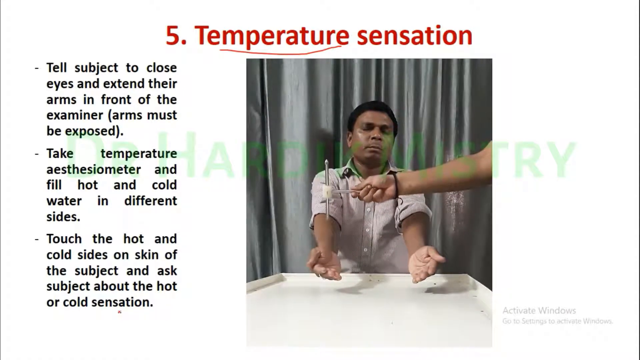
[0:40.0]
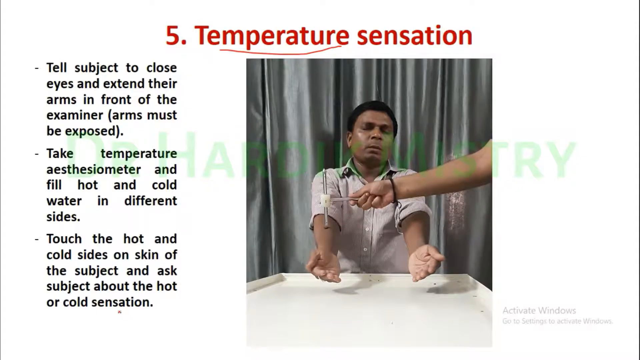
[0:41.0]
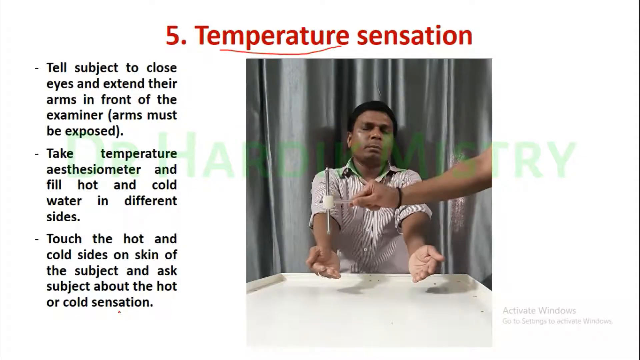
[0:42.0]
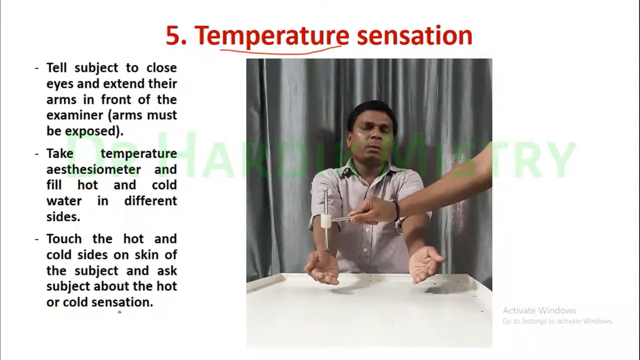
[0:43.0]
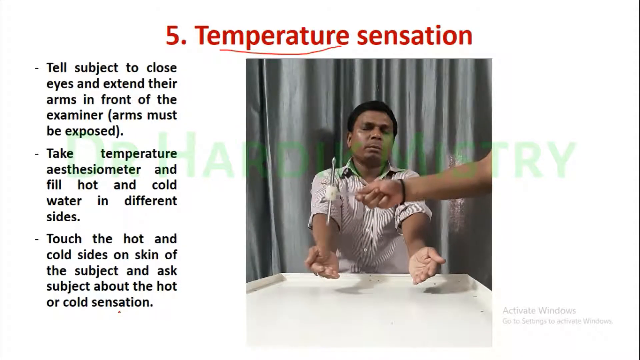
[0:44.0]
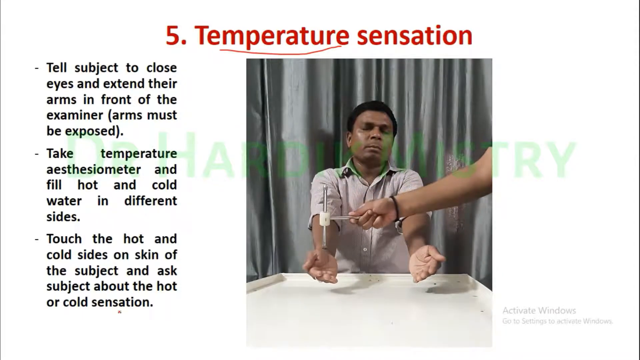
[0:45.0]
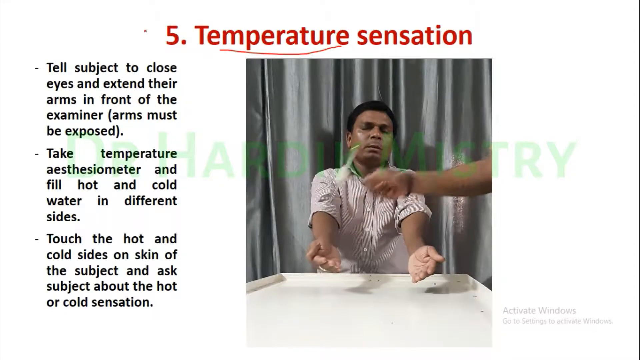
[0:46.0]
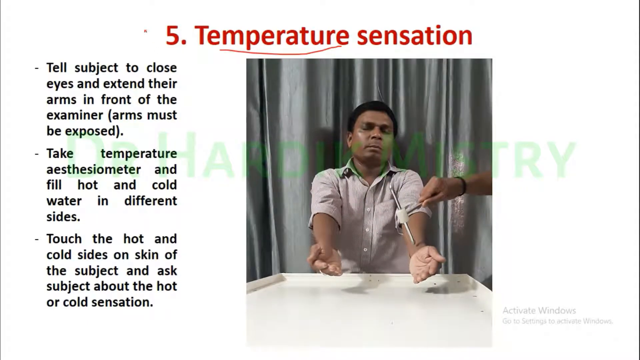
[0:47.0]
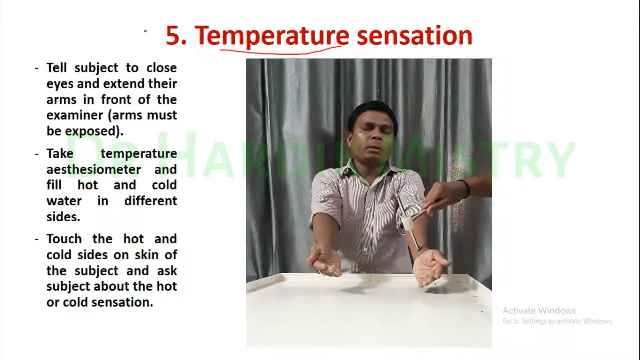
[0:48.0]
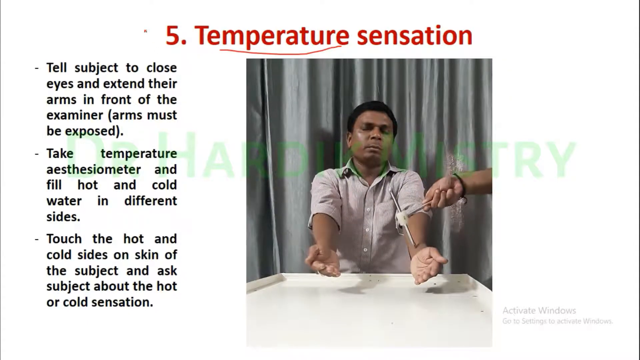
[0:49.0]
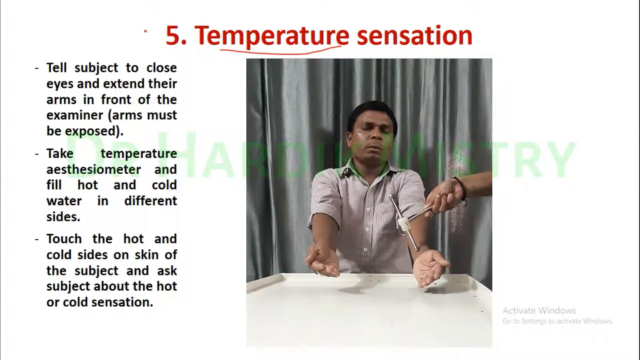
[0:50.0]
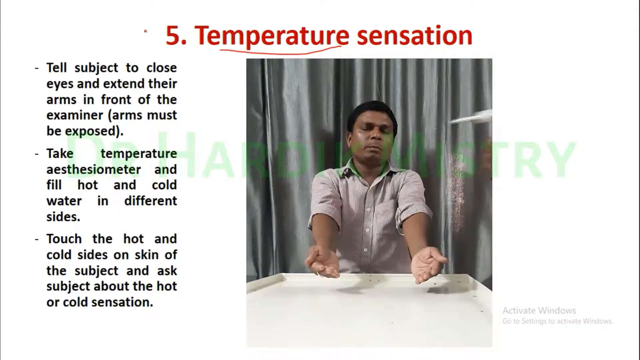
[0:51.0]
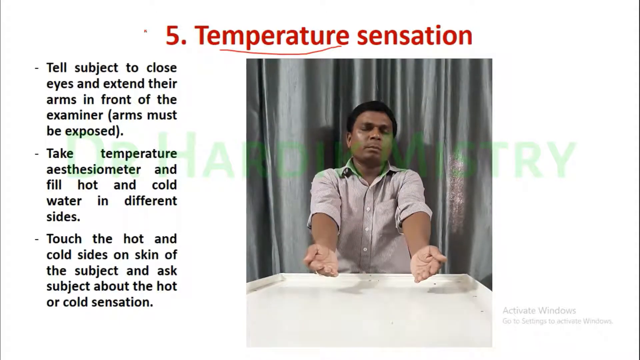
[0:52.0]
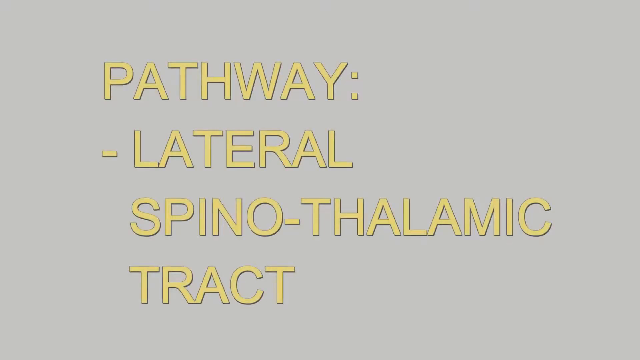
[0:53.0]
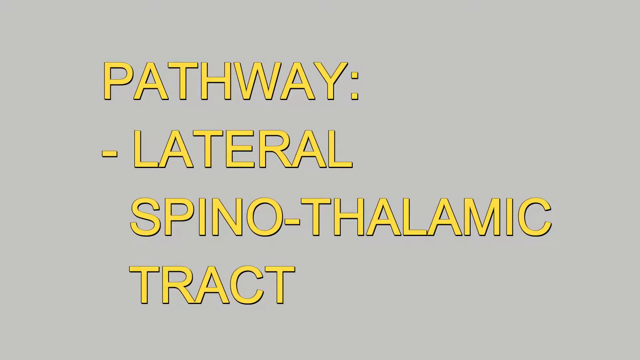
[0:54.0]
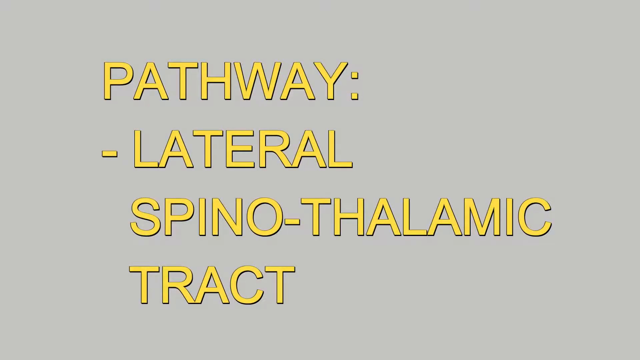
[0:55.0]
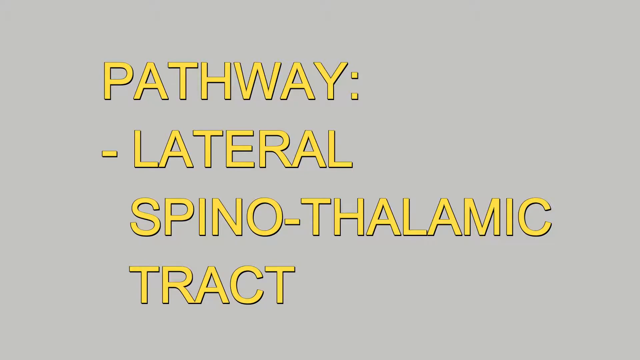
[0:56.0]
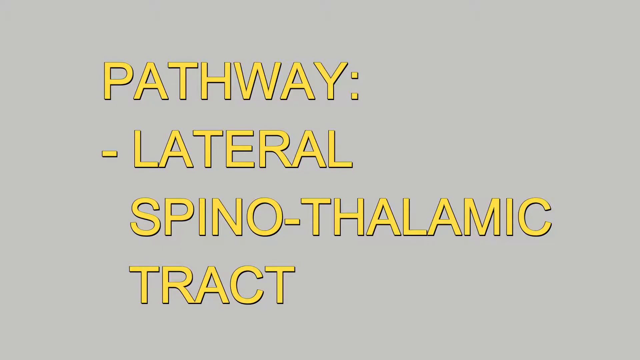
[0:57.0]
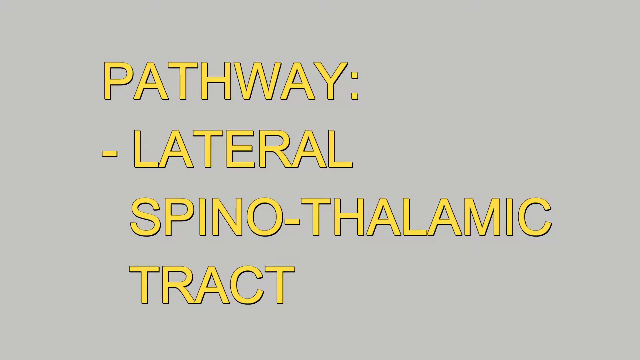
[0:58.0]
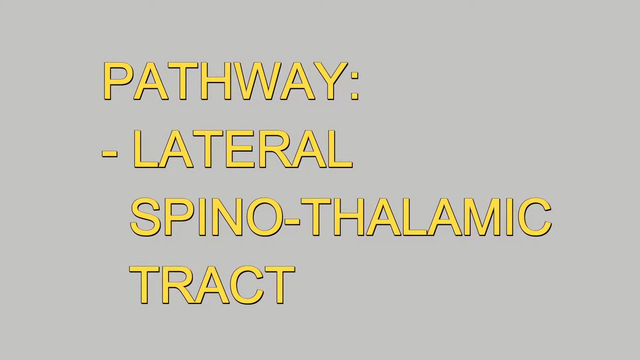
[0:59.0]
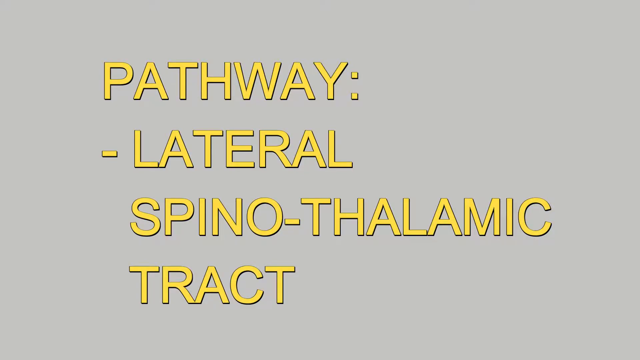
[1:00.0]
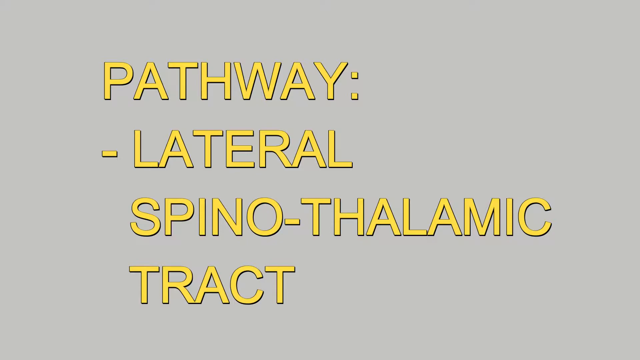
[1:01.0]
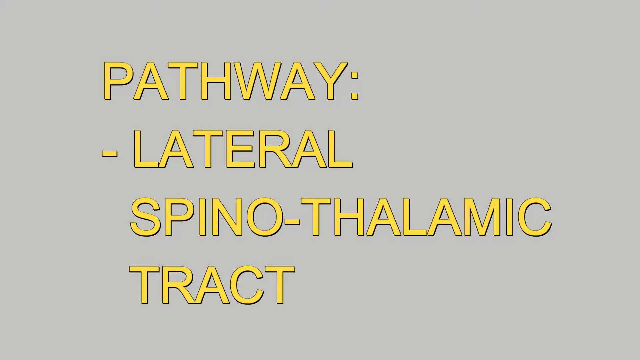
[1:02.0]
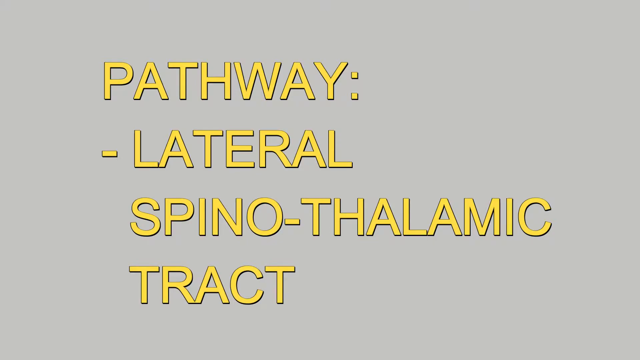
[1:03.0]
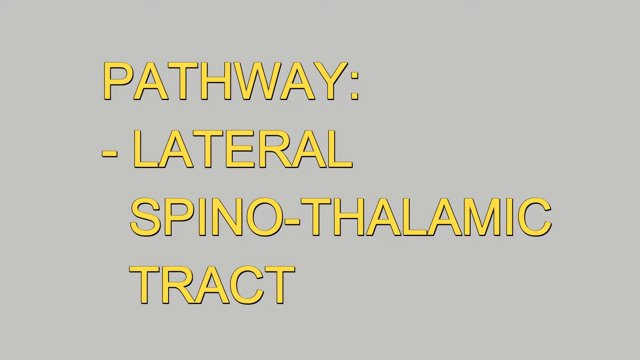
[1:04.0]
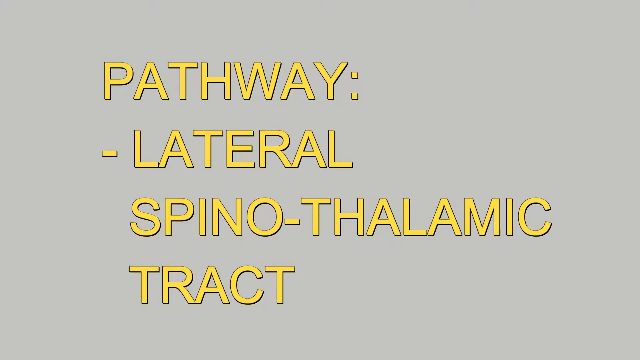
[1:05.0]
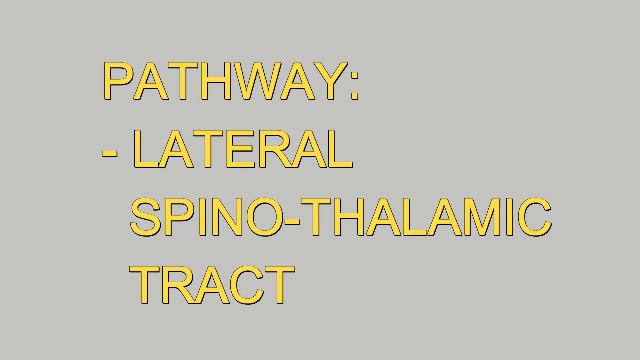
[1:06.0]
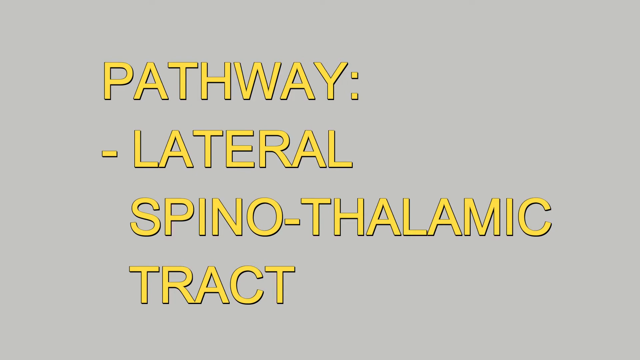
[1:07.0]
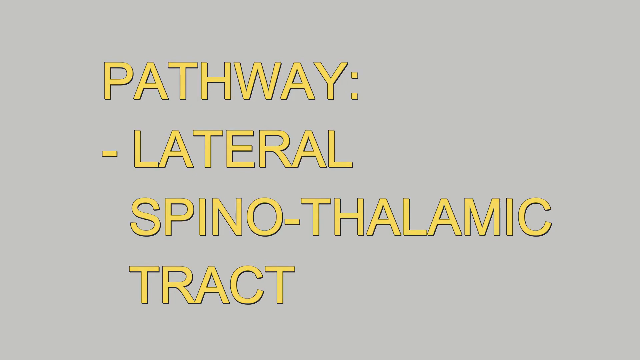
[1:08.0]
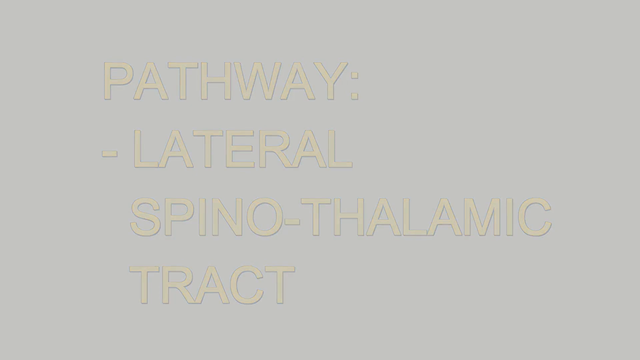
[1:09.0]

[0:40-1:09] A man sits in front of a big white tray. He wears a button-up dress shirt with a collar, sleeves rolled up above his elbows, and his hands are extended in front of him with palms up. He has short black hair and his eyes are closed. Someone holds a tool that looks almost like the letter T, holding it by the metal; there is a white thing at the top and two metal pieces coming out. They press the tips of the tool into the man's forearms. He keeps his eyes closed and says a word out loud each time it is pressed. The picture then changes to a gray background with yellow capital letters reading "PATHWAY, lateral spino-thalamic tract," the only text on that screen, and the letters slowly disappear.